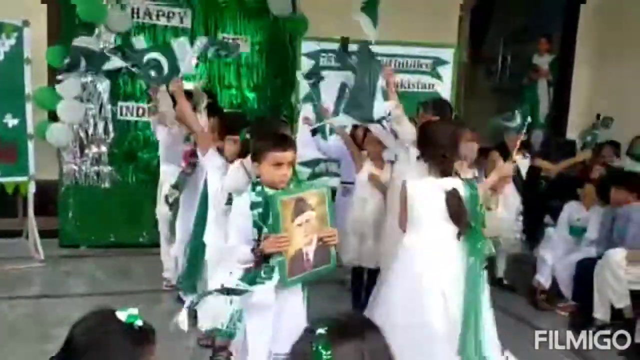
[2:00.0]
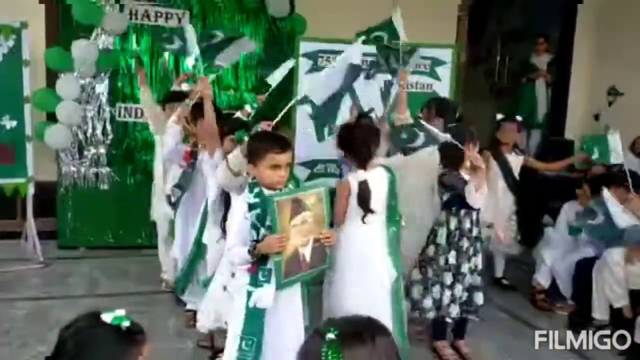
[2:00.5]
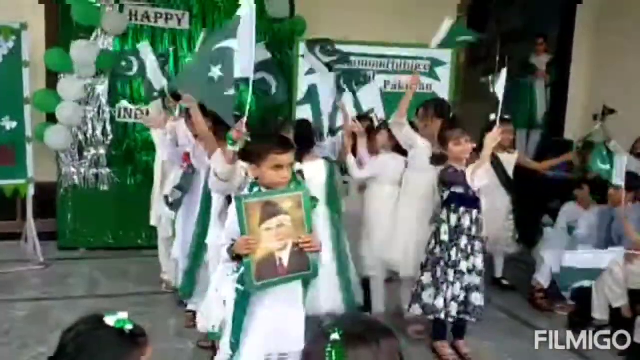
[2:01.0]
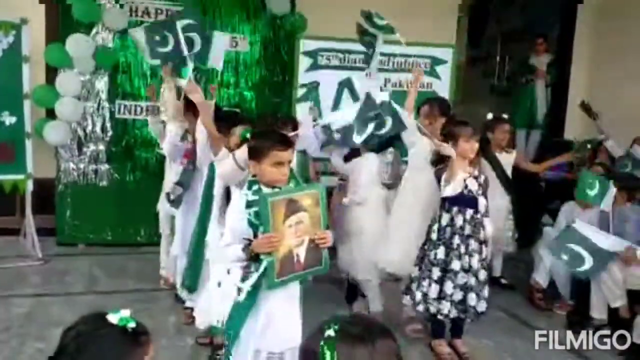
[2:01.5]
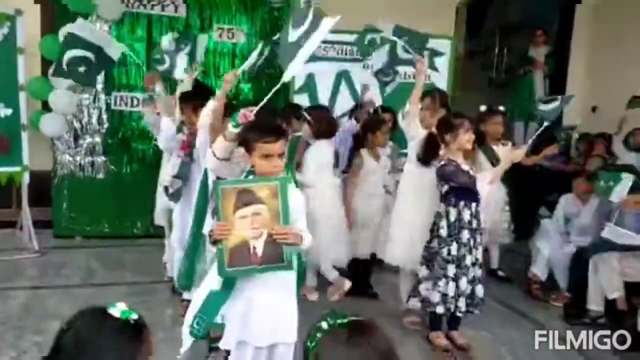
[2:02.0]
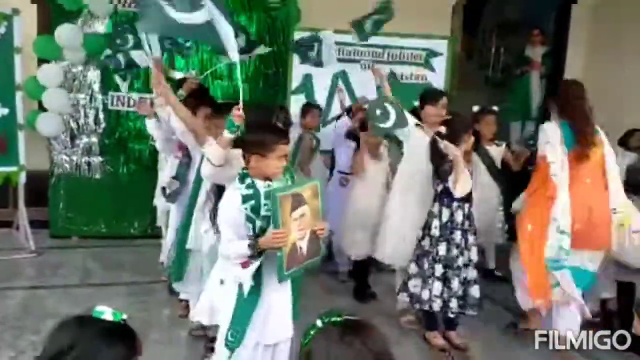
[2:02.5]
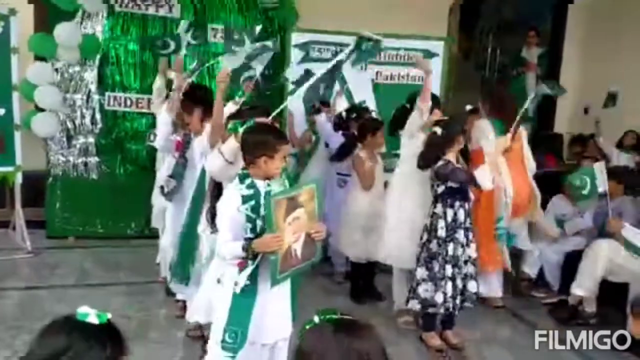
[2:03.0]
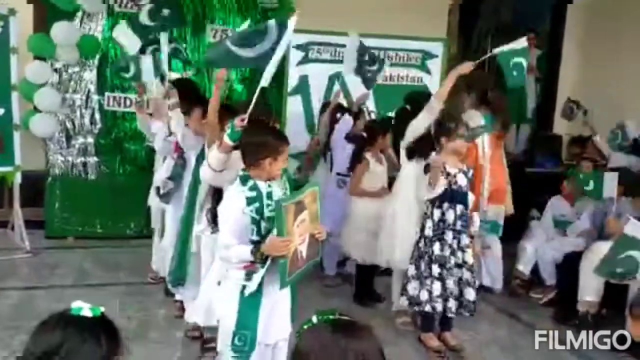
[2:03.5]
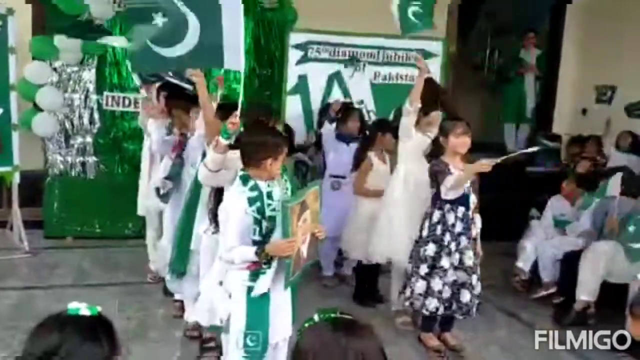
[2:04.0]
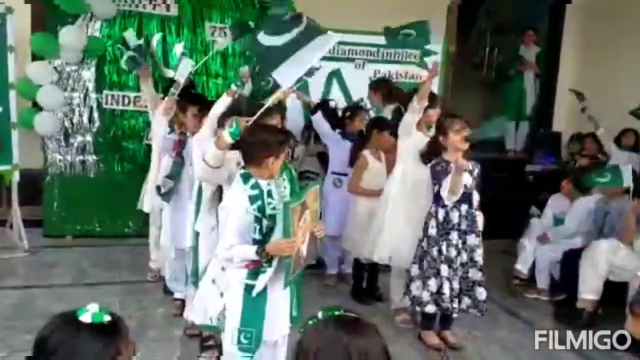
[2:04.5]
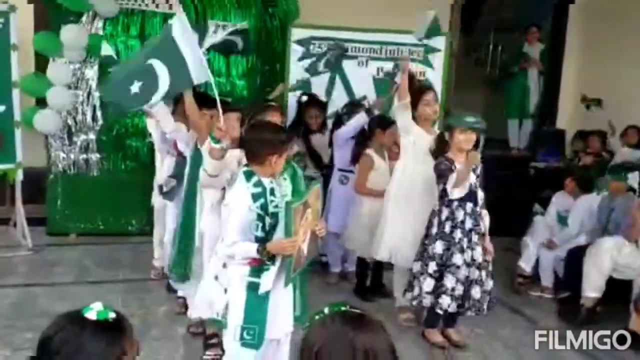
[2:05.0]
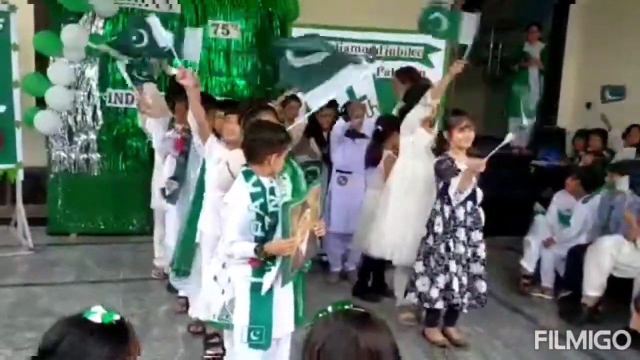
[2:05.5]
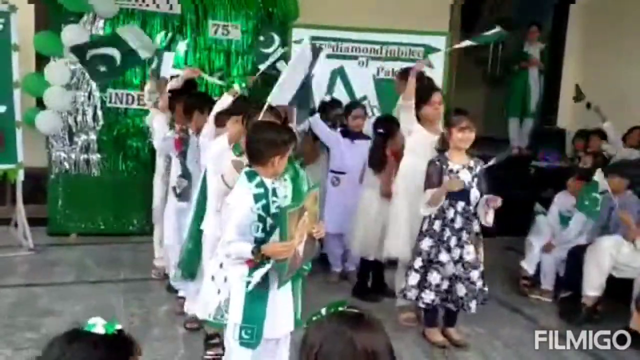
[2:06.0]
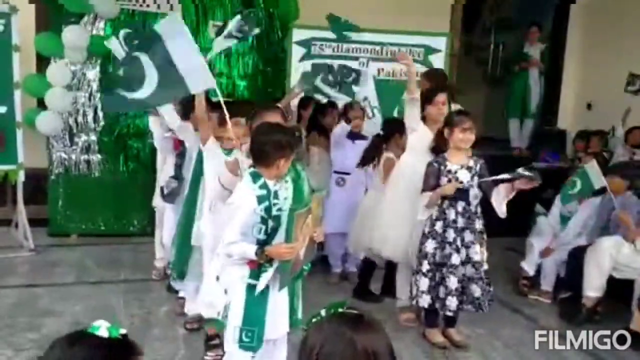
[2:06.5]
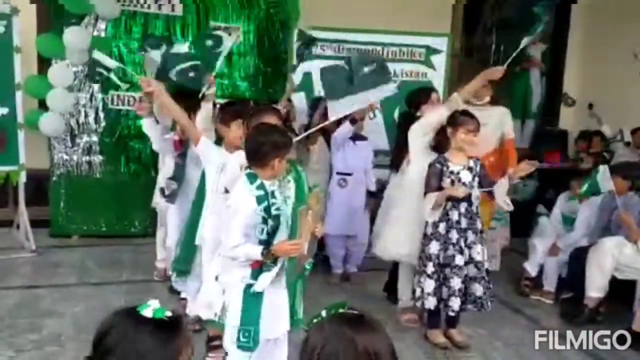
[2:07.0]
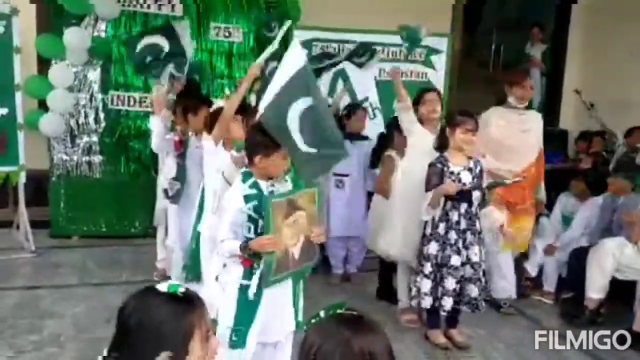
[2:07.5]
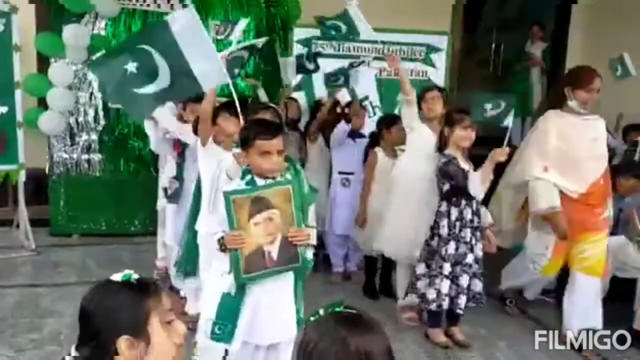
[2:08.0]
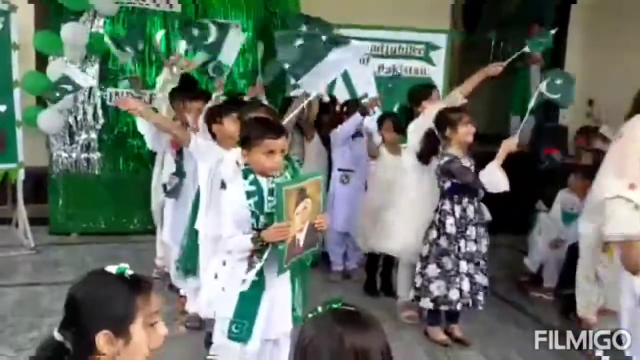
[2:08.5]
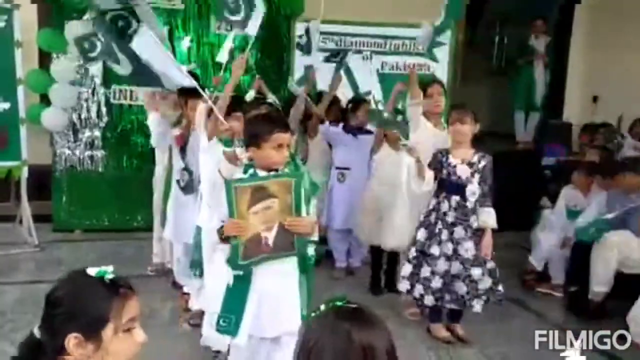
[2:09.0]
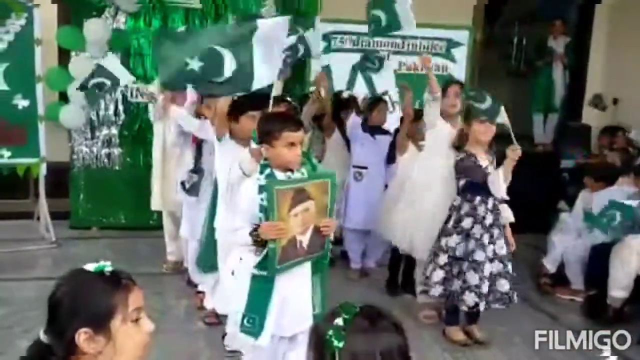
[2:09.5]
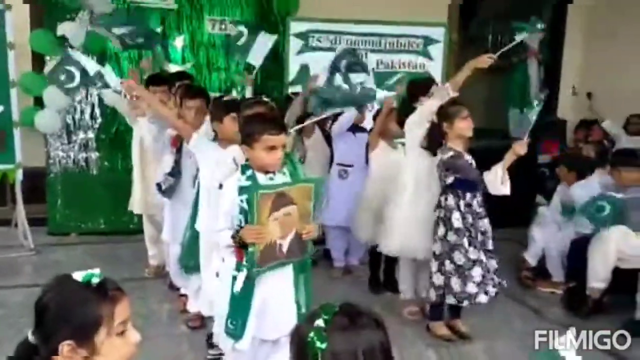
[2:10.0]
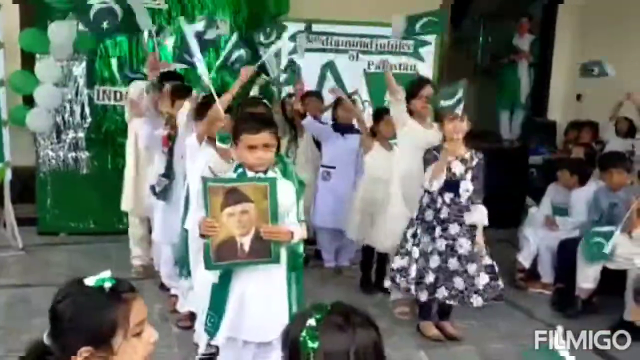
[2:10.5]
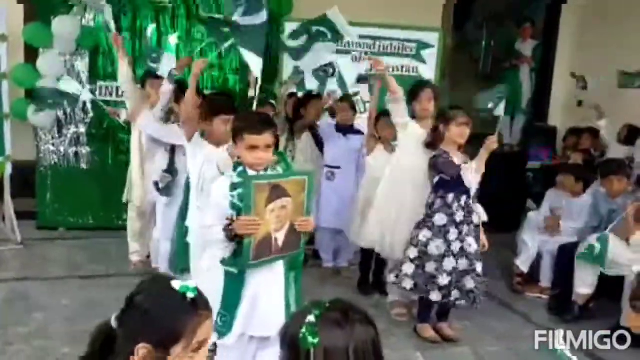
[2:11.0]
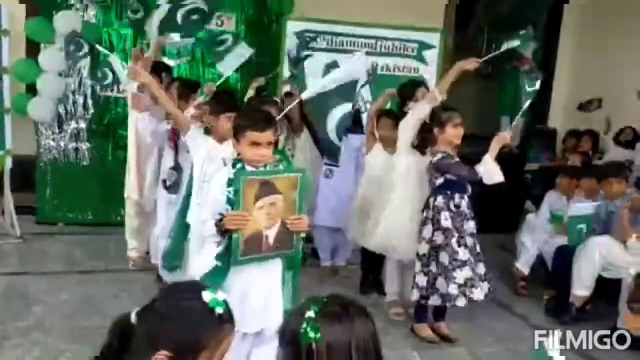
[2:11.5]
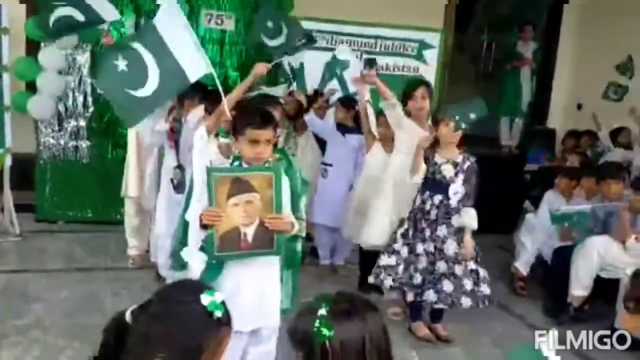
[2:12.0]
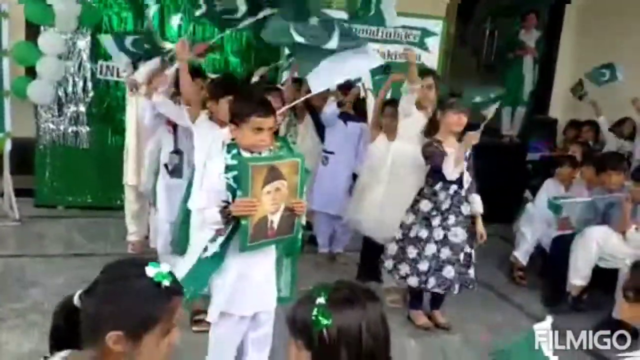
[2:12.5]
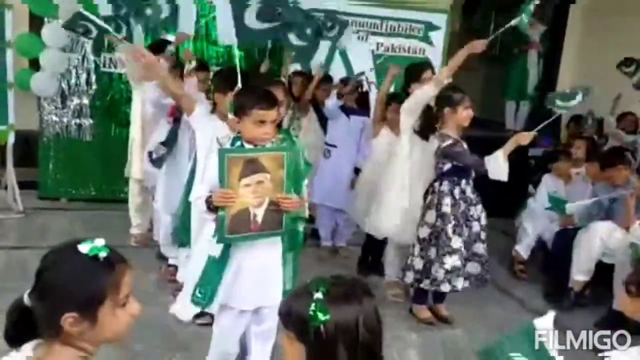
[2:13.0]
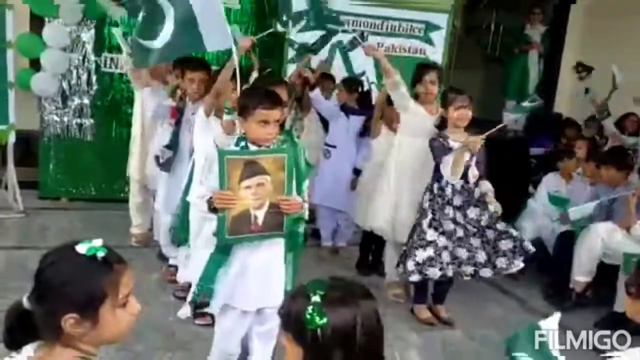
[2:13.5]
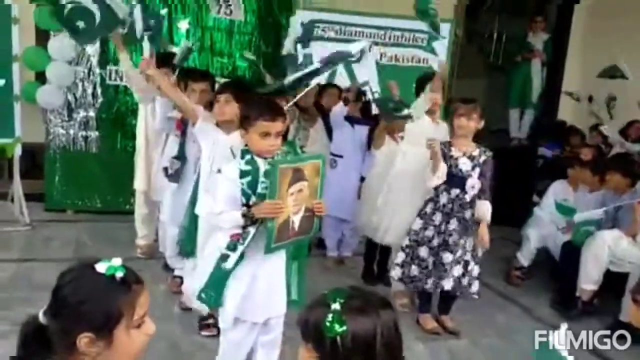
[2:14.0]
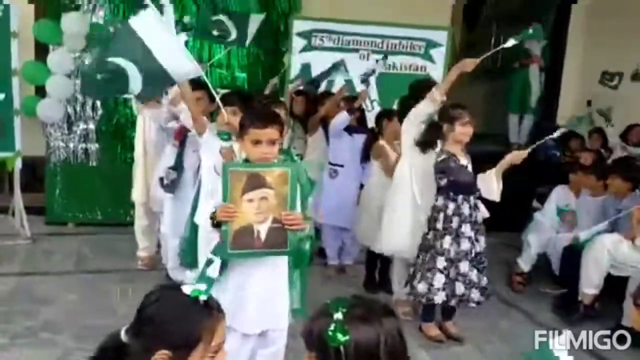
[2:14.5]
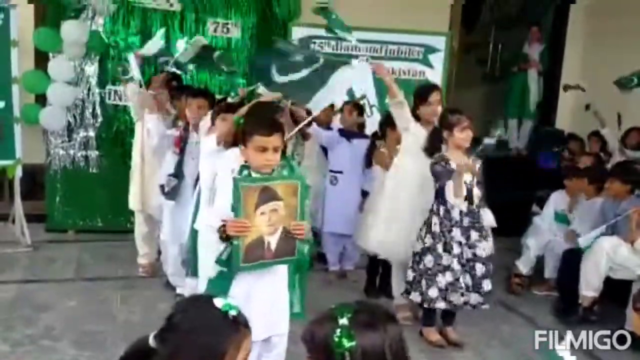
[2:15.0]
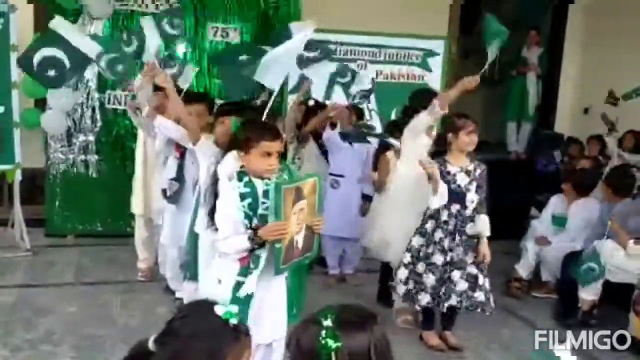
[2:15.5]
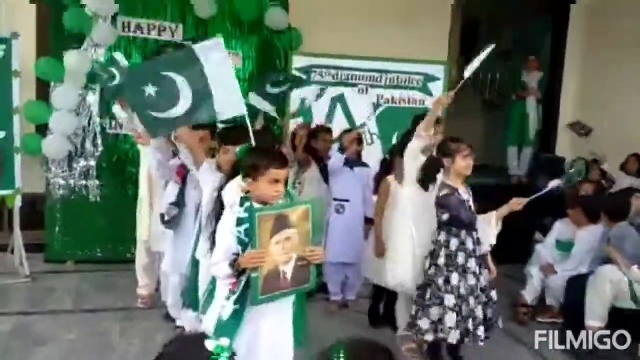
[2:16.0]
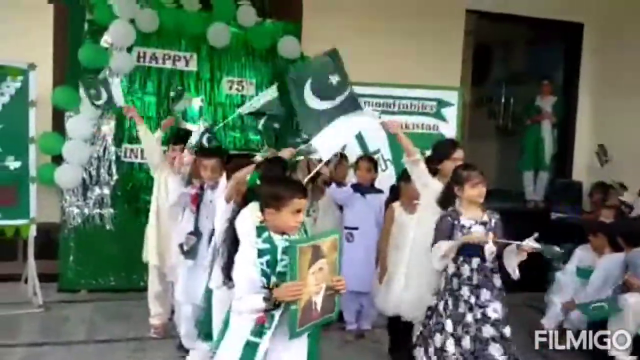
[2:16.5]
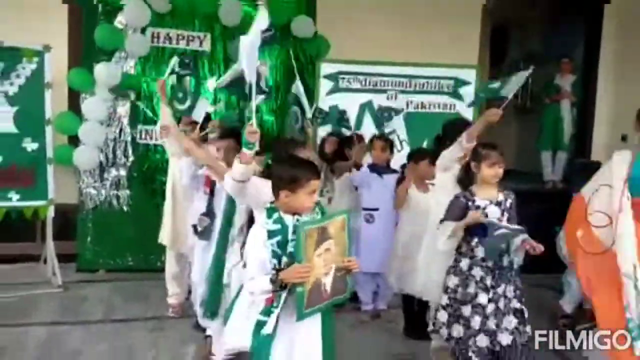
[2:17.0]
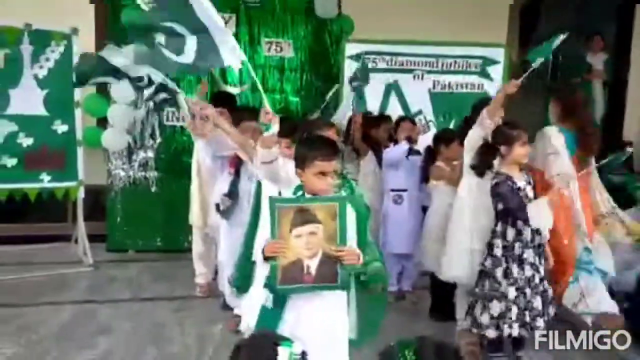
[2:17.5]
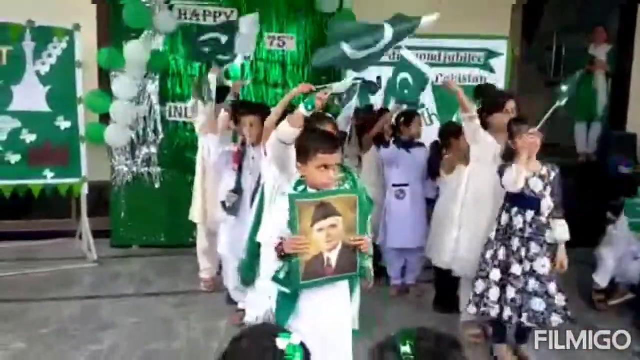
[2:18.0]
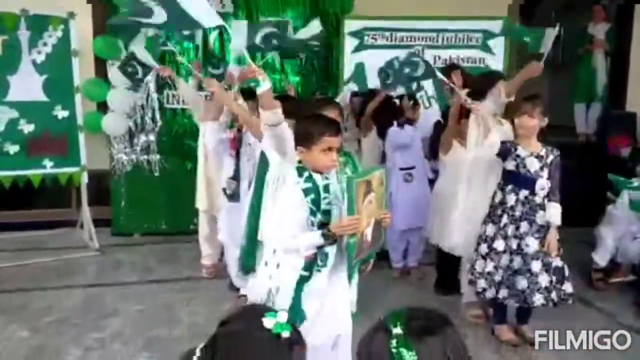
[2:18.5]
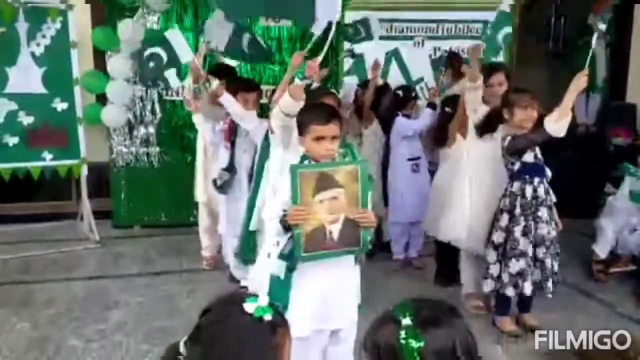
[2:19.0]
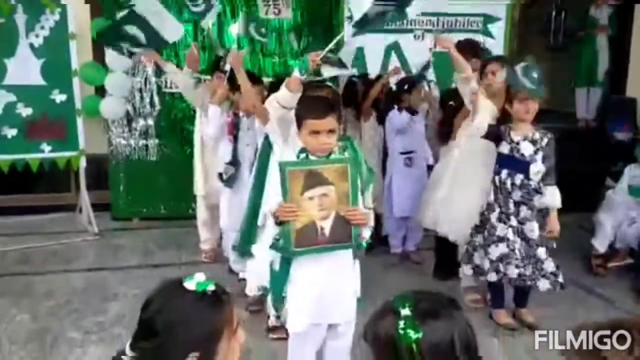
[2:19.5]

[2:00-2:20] There are now two rows, one of boys and one of girls, waving Pakistani flags. In the left row, with the boys and the one girl with the Pakistani flag, the frontmost child is the boy holding up the picture of the person. In the right row of girls, the frontmost child is the girl in the black and white floral dress. An adult woman with long brown hair in kind of a cream, orange and yellow dress is in the room, apparently a teacher. In the background on the right-hand side is a doorway with another person, presumably a woman, standing in it; she looks like she has some sort of red mask and wears a green and white dress, apparently another teacher. The group of students watching on the right-hand side of the room is seated, some of them also waving Pakistani flags. Most of them wear white dresses or outfits, and one has a blue shirt on.